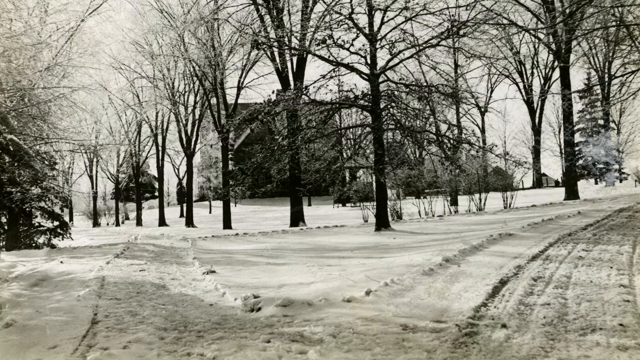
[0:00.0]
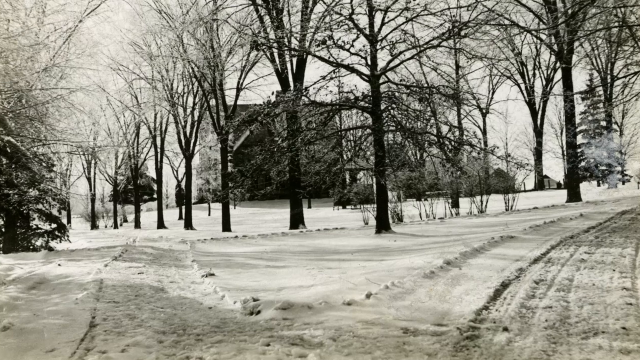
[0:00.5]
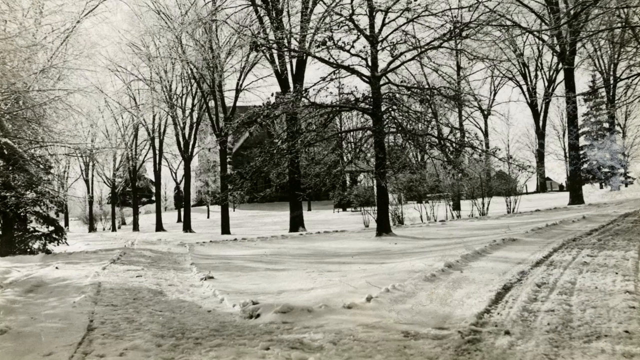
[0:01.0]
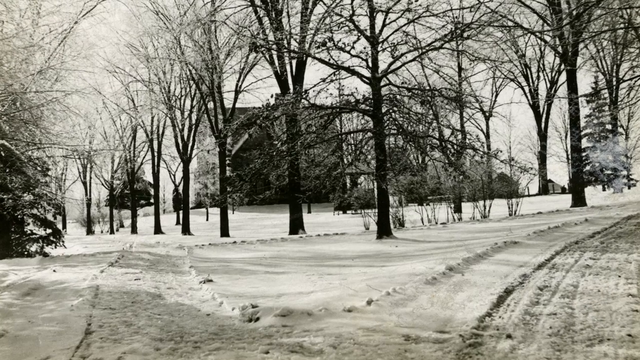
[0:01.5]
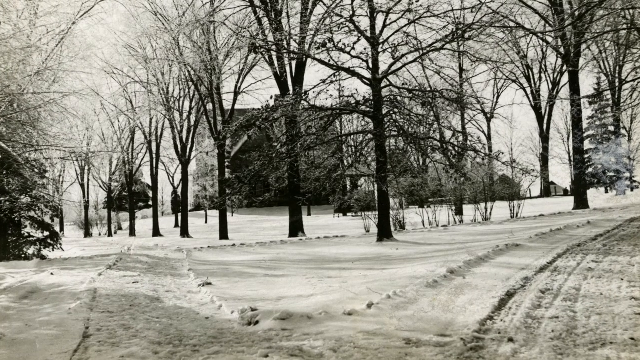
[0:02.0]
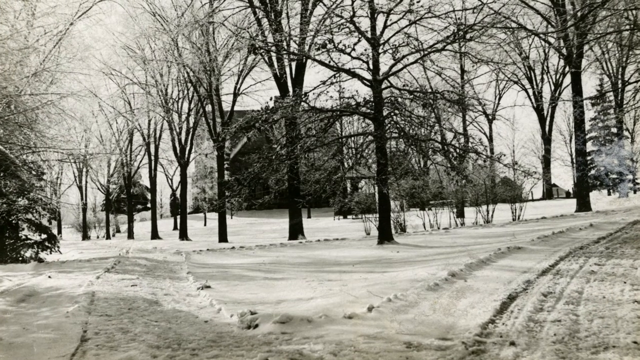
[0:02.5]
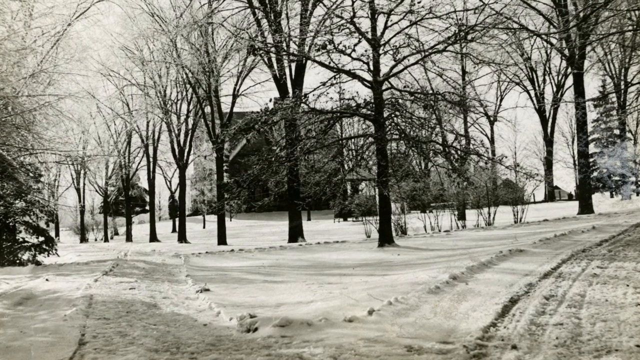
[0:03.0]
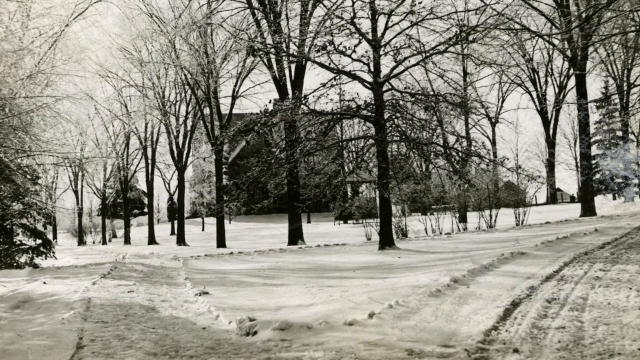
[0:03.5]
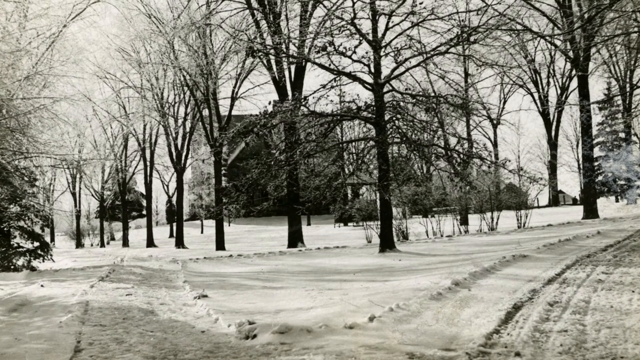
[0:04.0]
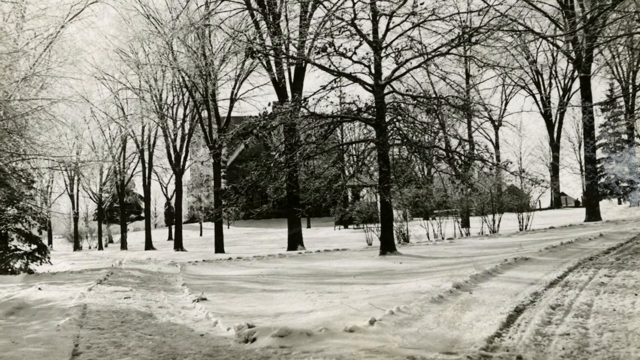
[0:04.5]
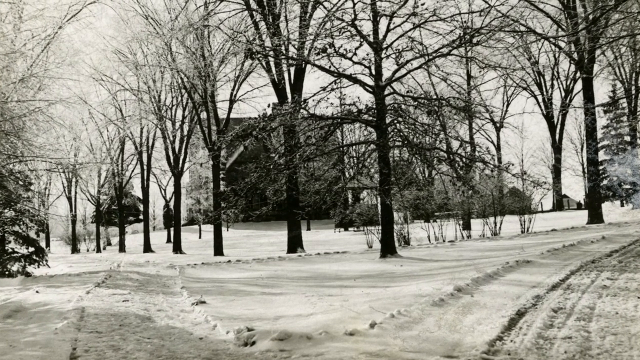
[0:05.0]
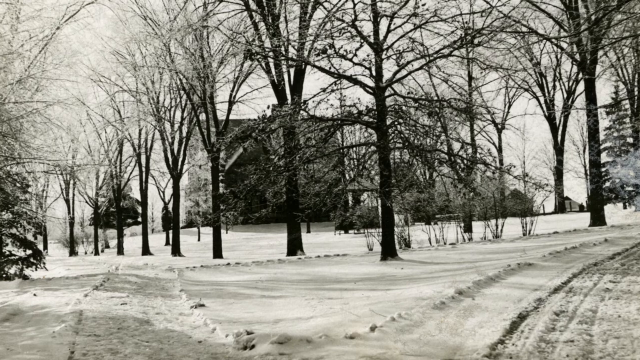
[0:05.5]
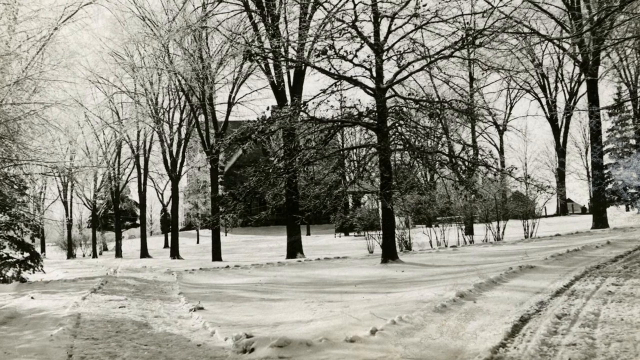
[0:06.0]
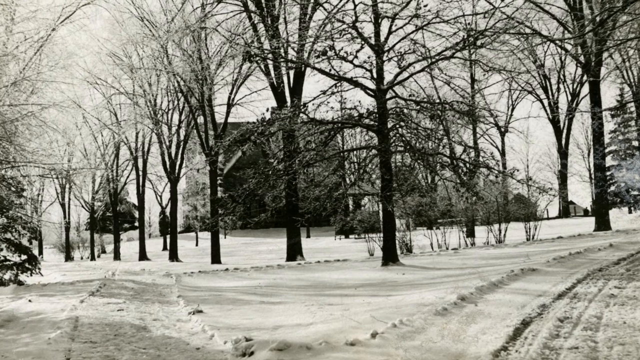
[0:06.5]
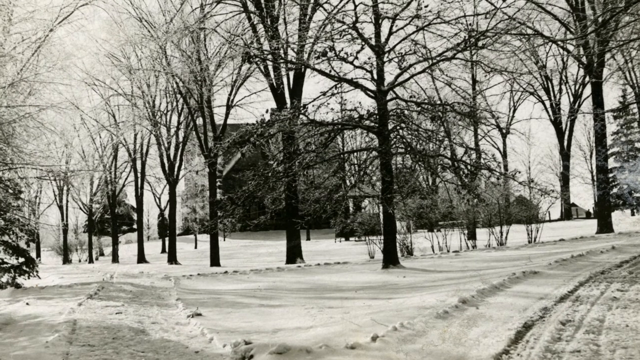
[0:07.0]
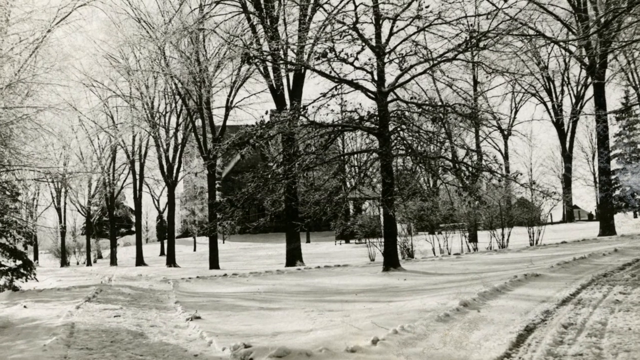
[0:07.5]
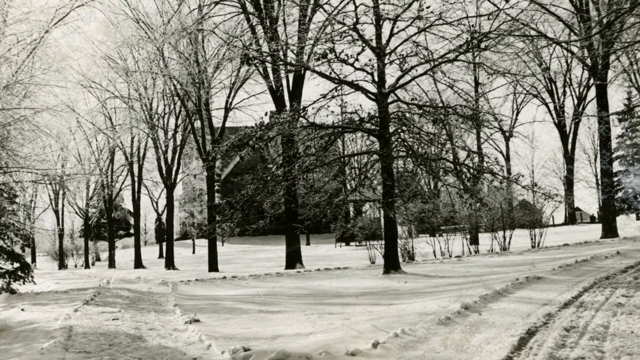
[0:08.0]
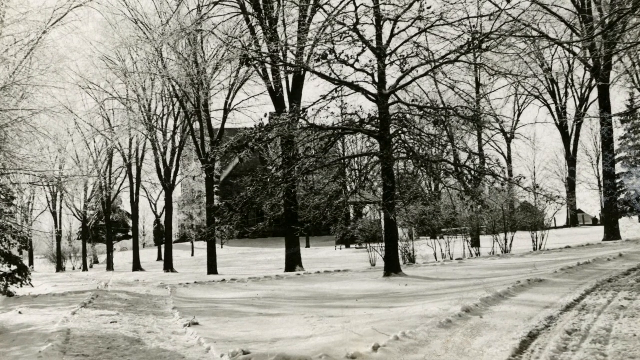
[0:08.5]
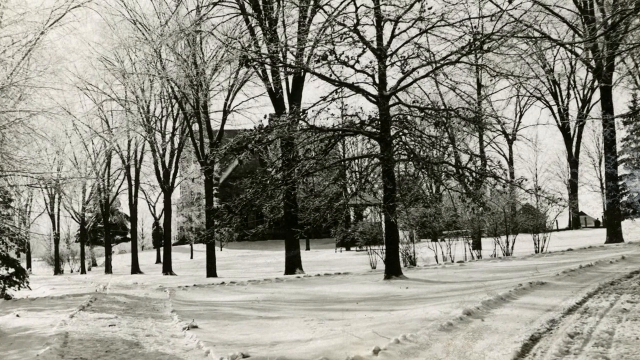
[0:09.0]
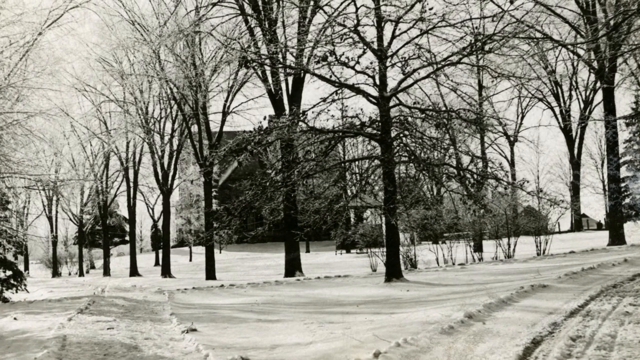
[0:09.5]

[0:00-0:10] The scene appears to be black and white, though it may be lightly sepia; it is hard to tell. Light snow seems to have fallen, possibly a few days ago, and there are a lot of tire tracks in it. The view then zooms in on the trees. The place looks extremely lonely and sad, seemingly barren, with nothing going on and no visible signs of life.